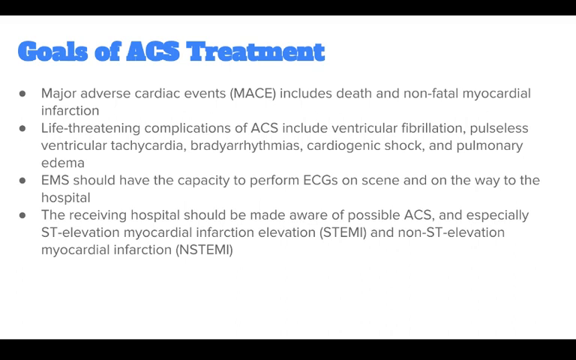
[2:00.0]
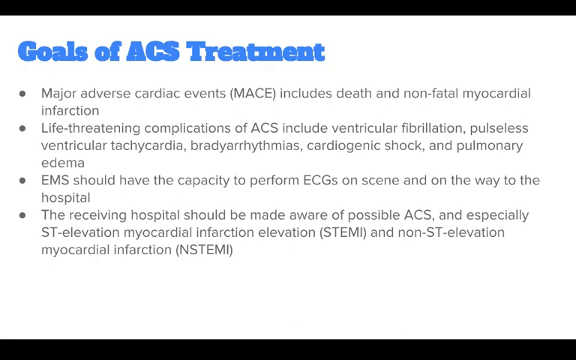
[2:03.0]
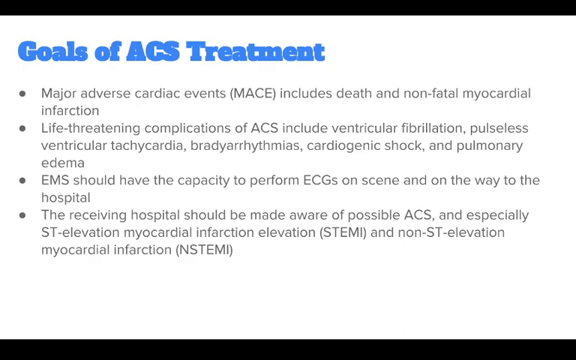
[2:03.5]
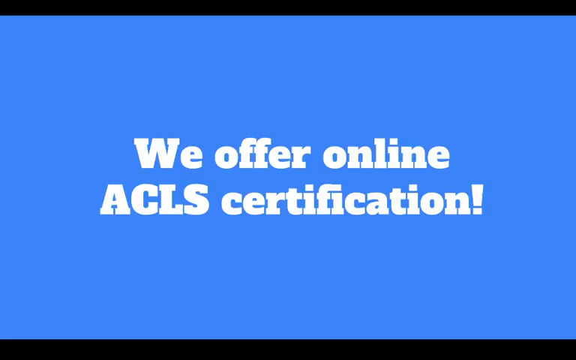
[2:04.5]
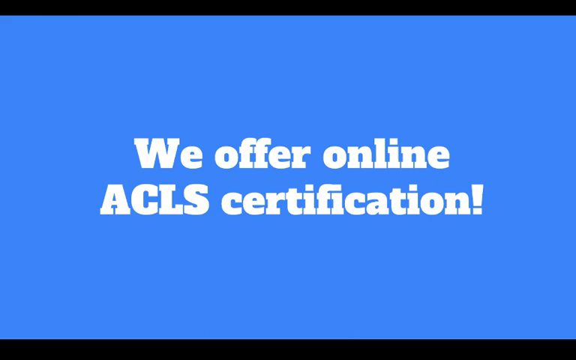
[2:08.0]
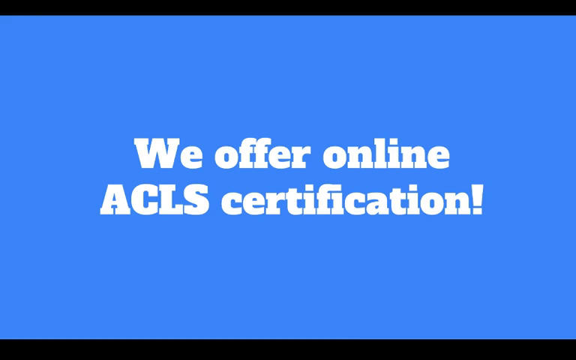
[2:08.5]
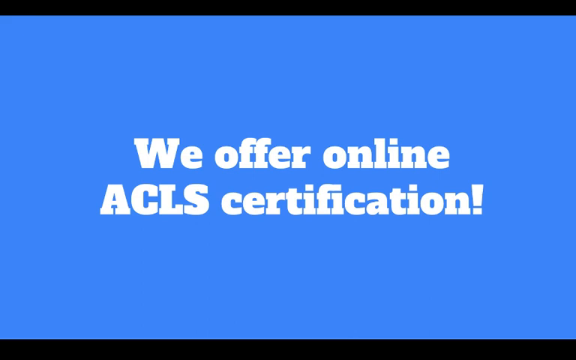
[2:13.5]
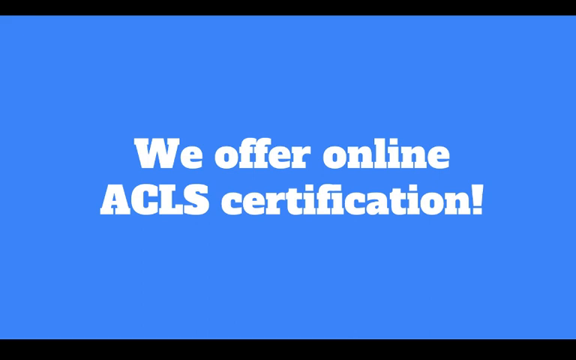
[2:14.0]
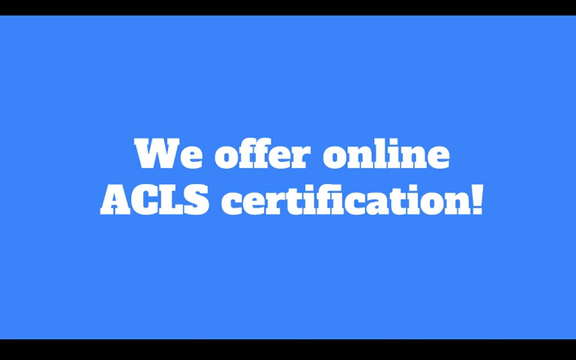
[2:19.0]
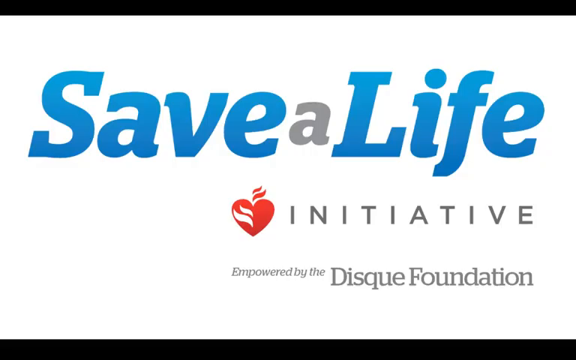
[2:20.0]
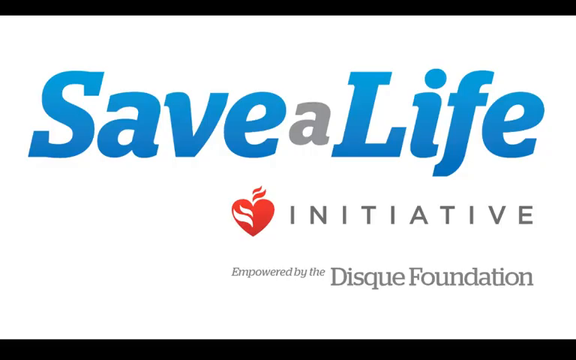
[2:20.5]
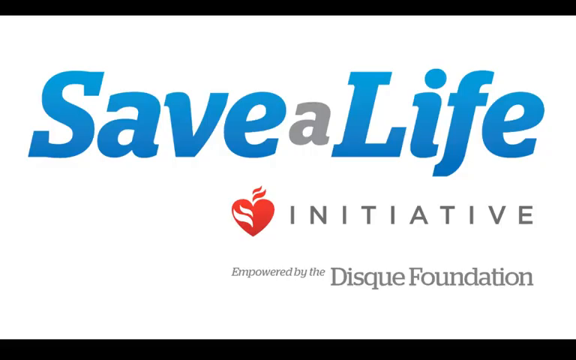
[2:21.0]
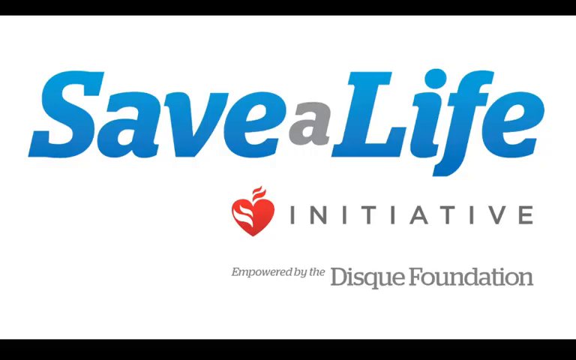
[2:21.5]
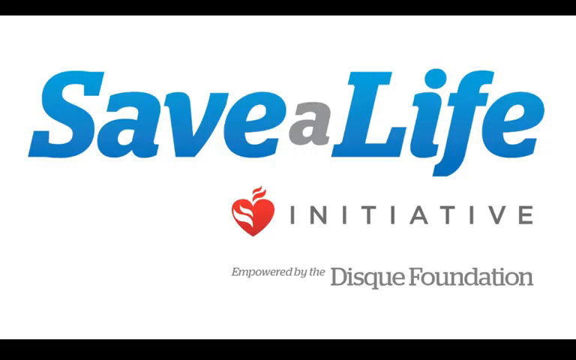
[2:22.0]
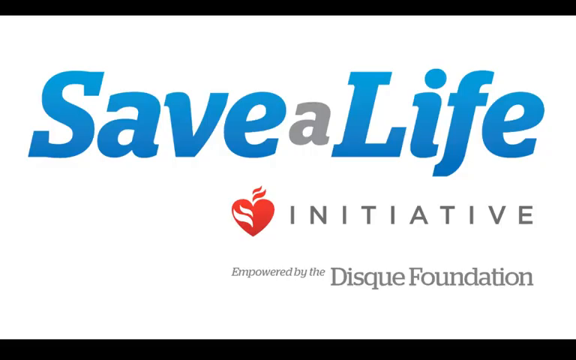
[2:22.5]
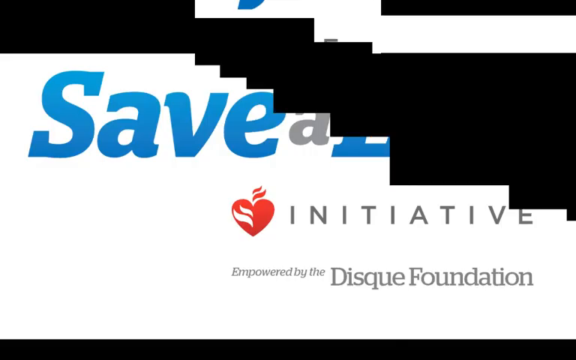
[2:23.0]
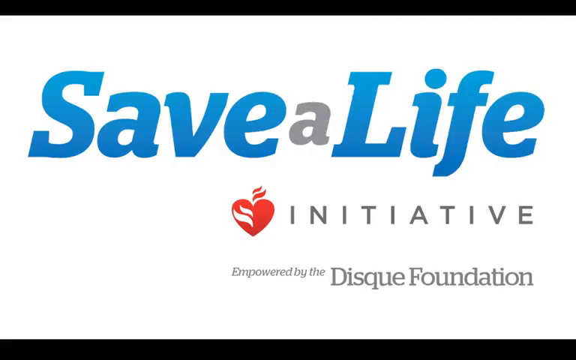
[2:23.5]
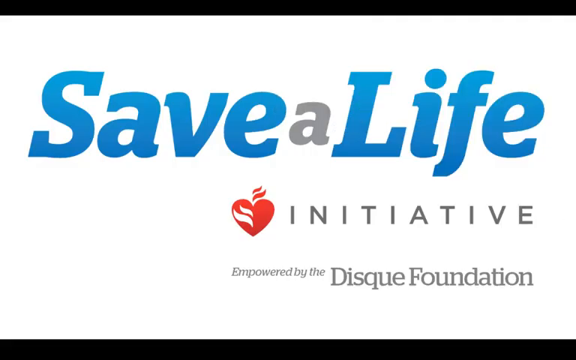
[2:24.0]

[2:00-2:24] The goals of ACS treatment screen is followed by a gradient screen that is mostly sky blue and flows into black at the bottom. Large white text is centered horizontally and vertically: "We offer online ACLS certification!", with "ACLS" in all caps and an exclamation point after "certification". This leads into the final screen, which shows "Save a Life" in very large letters centered horizontally. "Save" and "Life" are in sky blue with capital S and L, while the lowercase "a" between them is gray. Below the "a" and "Life" is "INITIATIVE" in all caps, in what looks like the same gray. To the left of the I in "INITIATIVE" is a heart that is mostly red, with a couple of white squiggly lines in the middle on its left side, and red squiggly lines above the heart going from the center toward the upper right. Underneath the heart and the word "INITIATIVE", in gray print, are the words "empowered by the Disque Foundation"; "empowered by" is in very small font and "Disque Foundation" is moderate in size, with capital D and F. The background is a gradient that is mostly white and flows into black at the bottom.